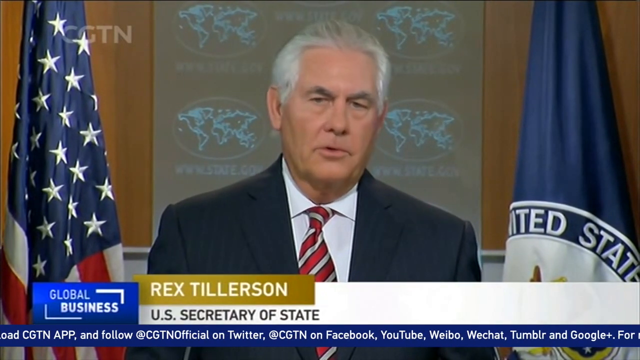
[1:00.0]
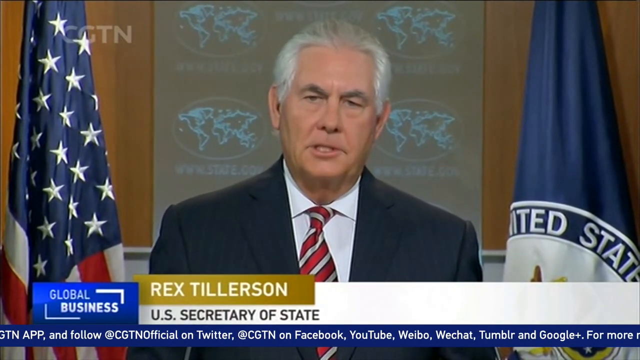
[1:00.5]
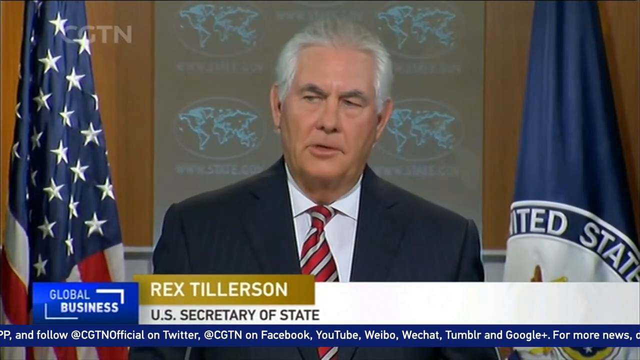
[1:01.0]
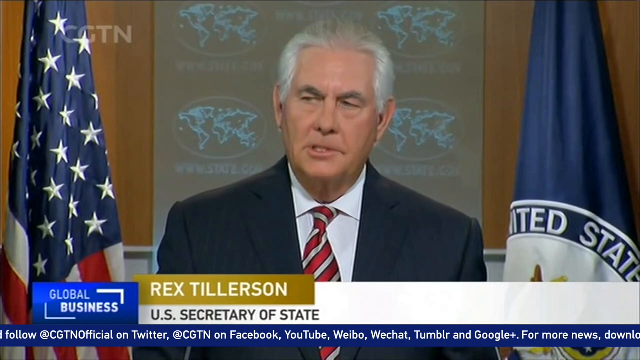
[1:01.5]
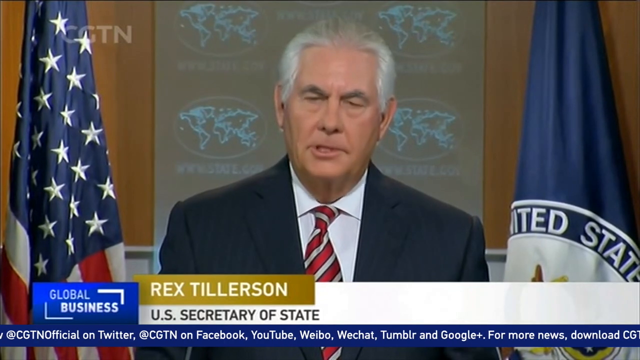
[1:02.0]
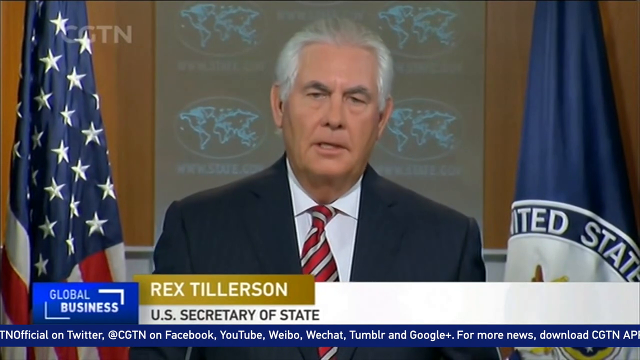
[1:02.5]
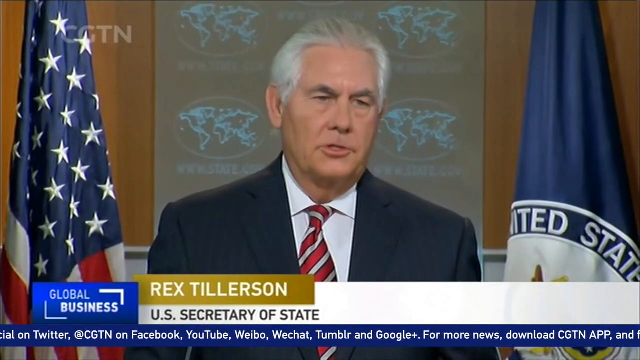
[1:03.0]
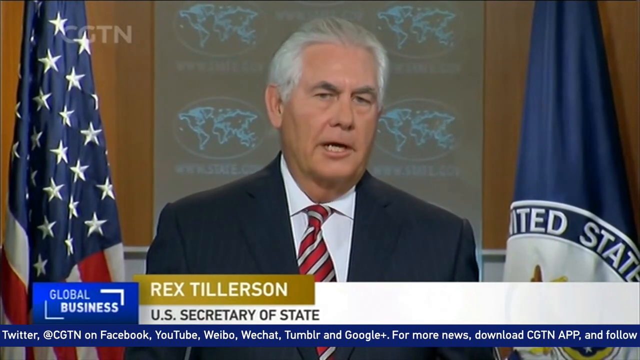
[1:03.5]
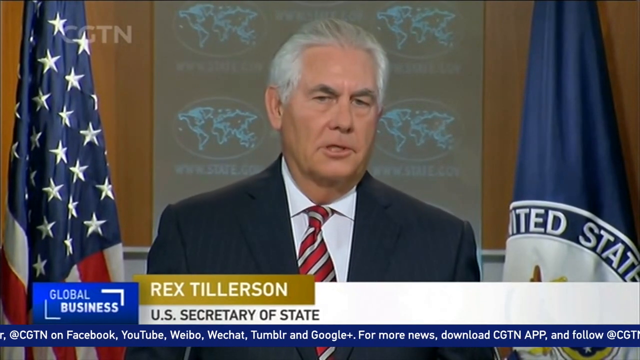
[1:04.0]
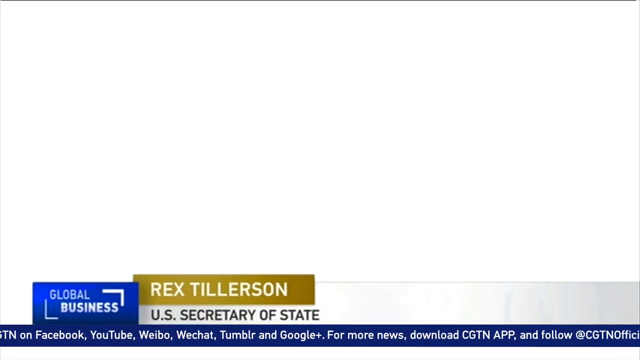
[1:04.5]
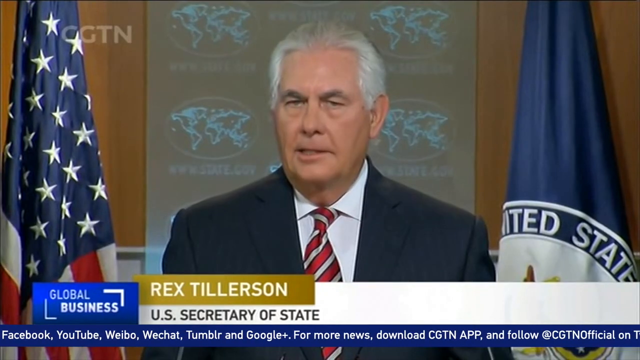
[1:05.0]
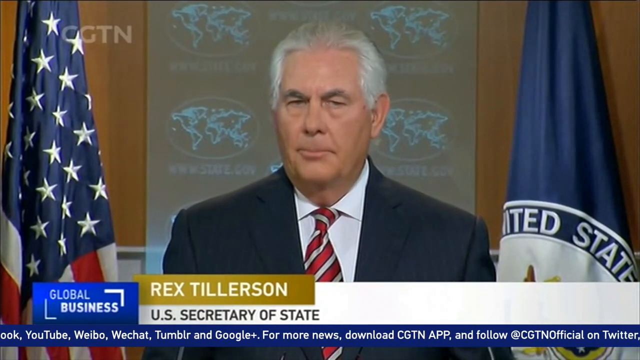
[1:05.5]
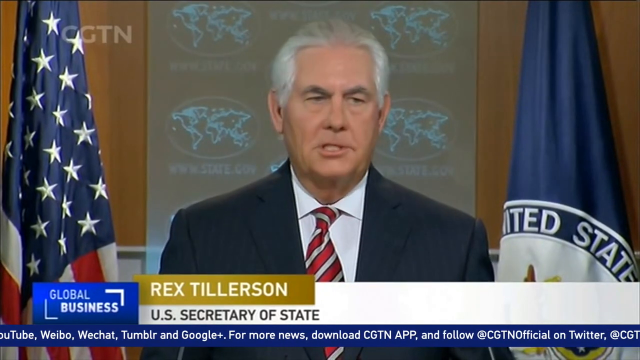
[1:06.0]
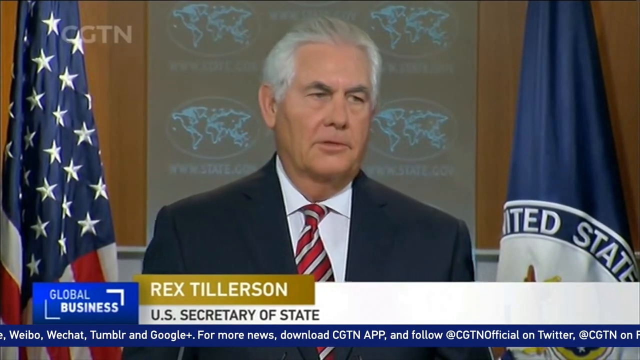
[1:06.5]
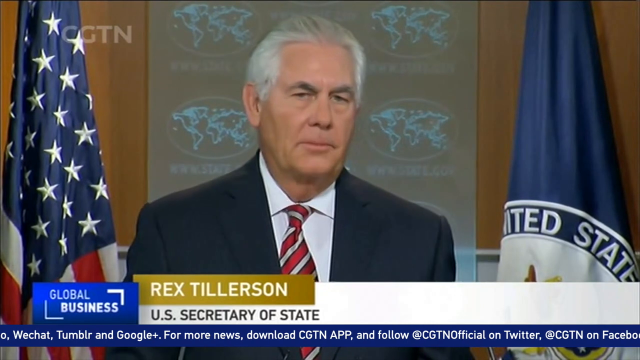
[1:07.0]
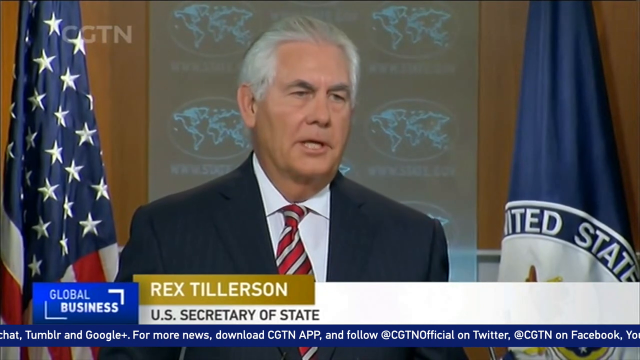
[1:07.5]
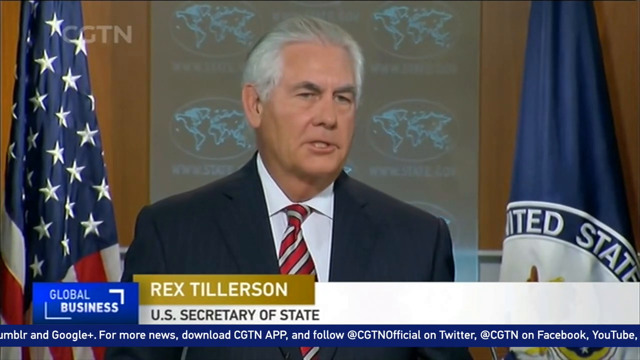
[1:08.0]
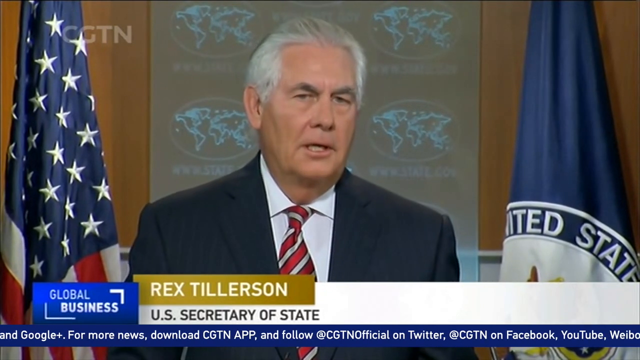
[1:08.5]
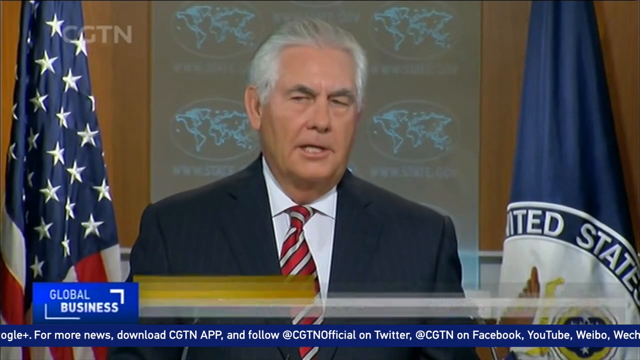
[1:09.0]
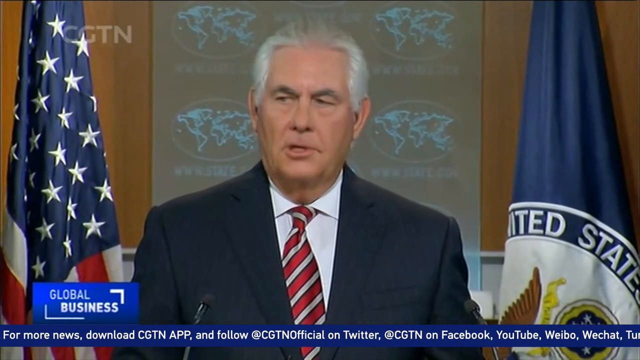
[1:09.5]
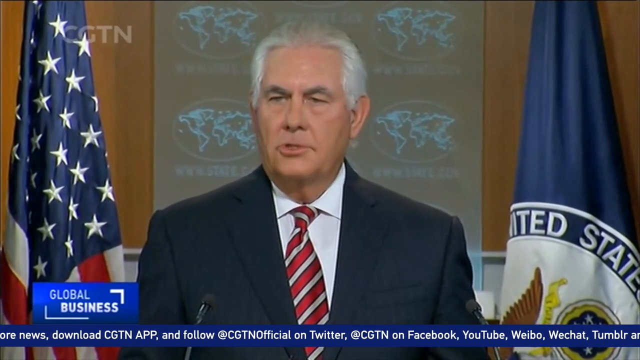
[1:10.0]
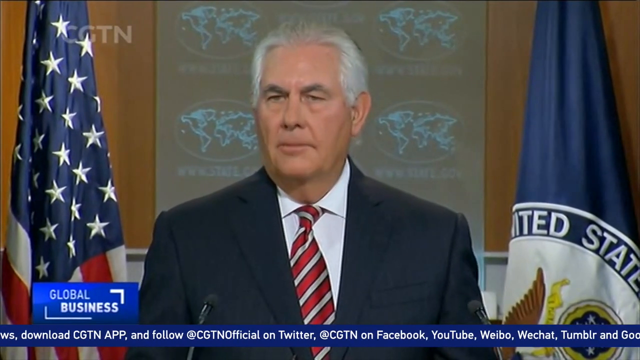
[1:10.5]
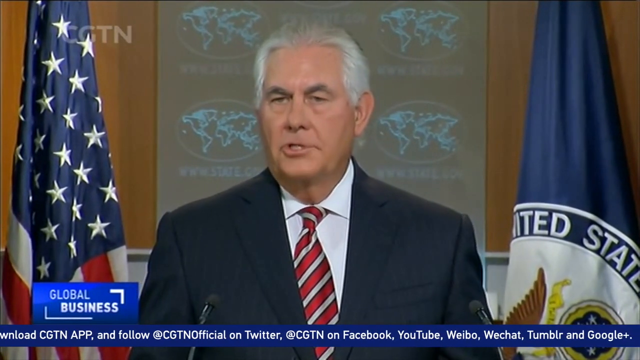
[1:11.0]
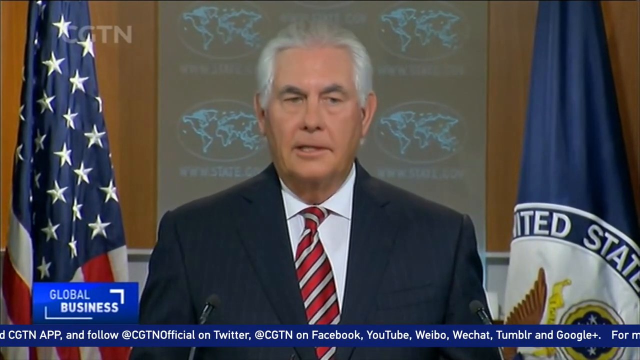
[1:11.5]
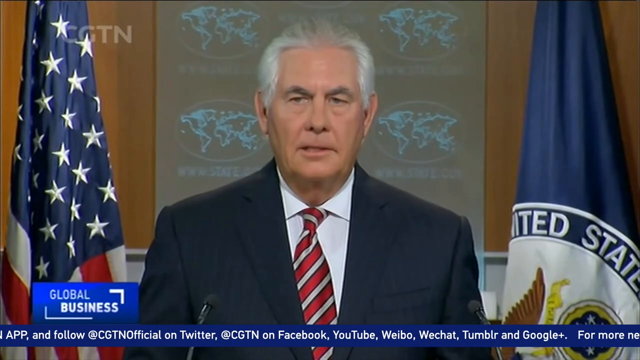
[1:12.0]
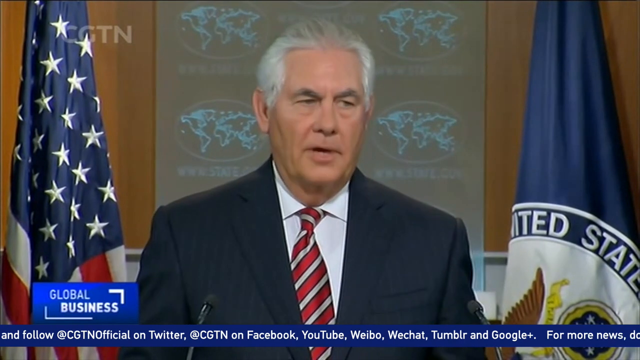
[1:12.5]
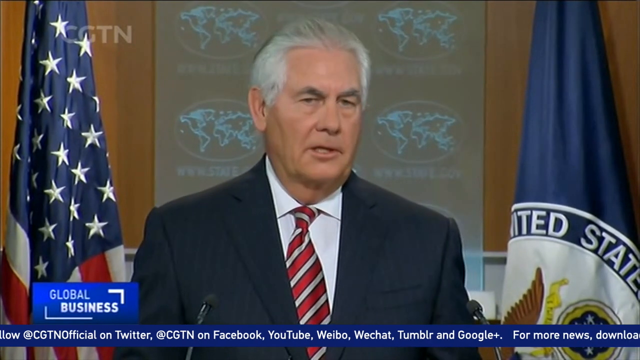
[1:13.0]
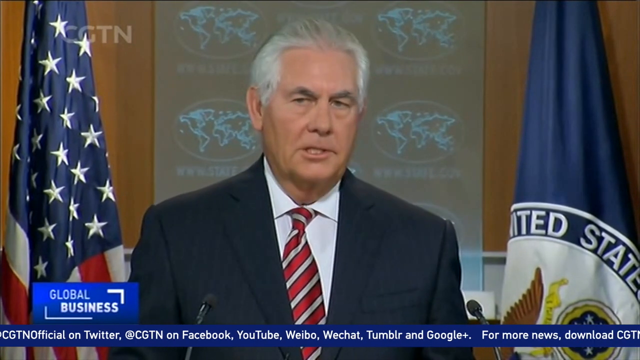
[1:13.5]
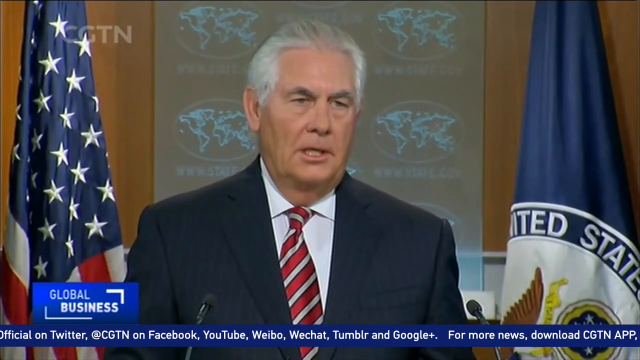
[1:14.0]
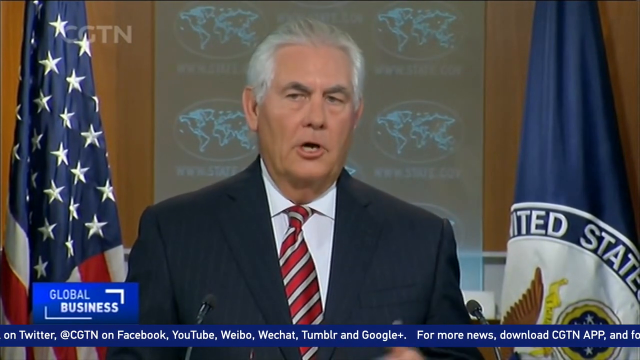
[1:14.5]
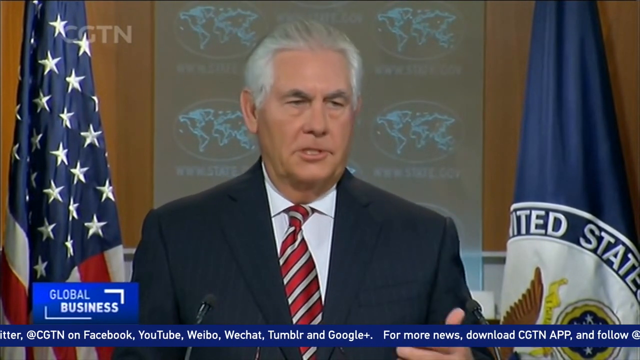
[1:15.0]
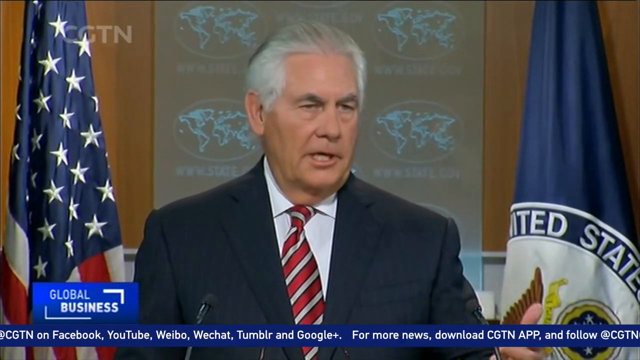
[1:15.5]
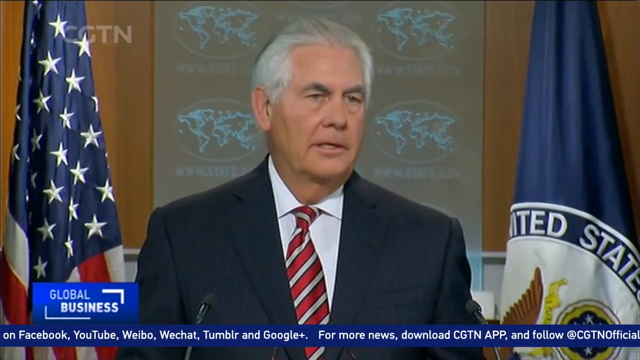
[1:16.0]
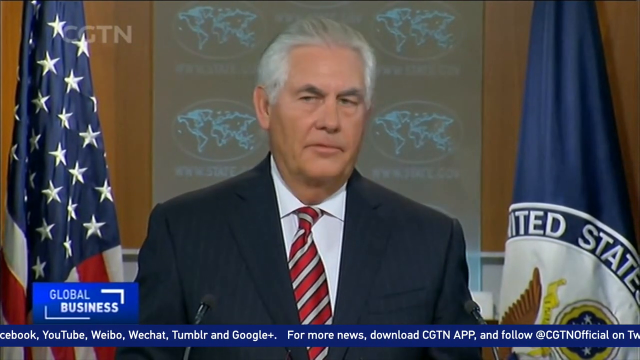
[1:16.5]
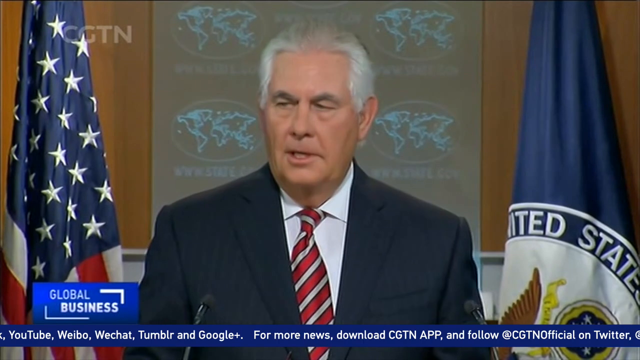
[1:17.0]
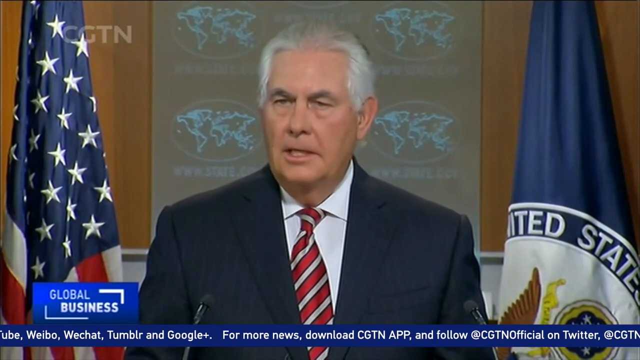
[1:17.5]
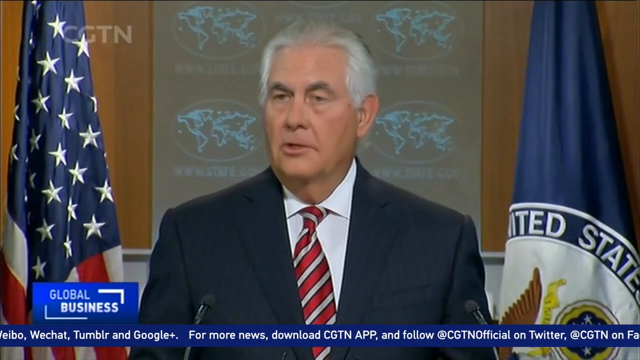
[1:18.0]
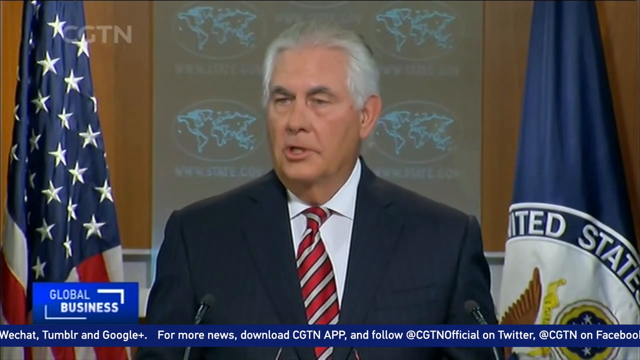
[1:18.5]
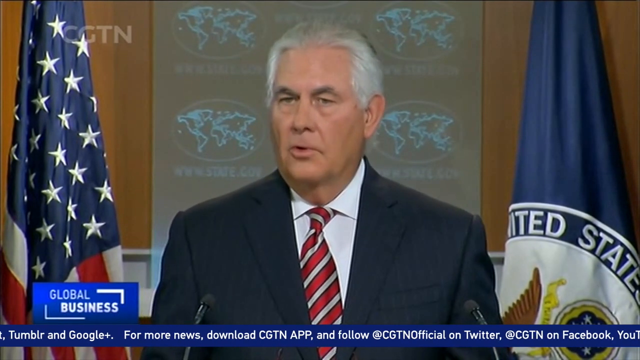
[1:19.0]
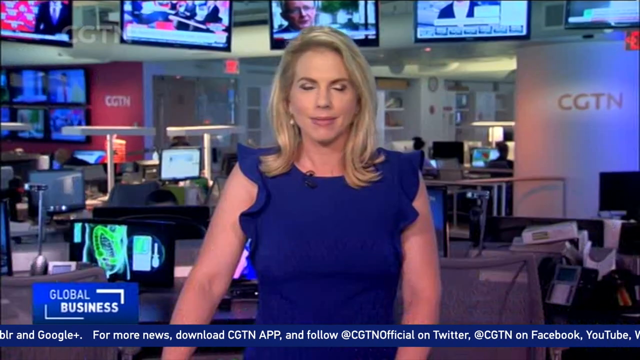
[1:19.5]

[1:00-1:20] A man with white hair, wearing a black suit, a white dress shirt, and a red and white tie, stands at the podium speaking. To his left is the flag of the United States of America; to his right is another flag that says "United States", though its details cannot be seen. "Global Business" appears in the lower left-hand corner. Beneath the video of the man he is identified as "Rex Tillerson, United States Secretary of State". The ticker continues scrolling across the very bottom of the screen, reading "download CGTN app. Follow us on Facebook, Twitter, Tumblr, and Google+".